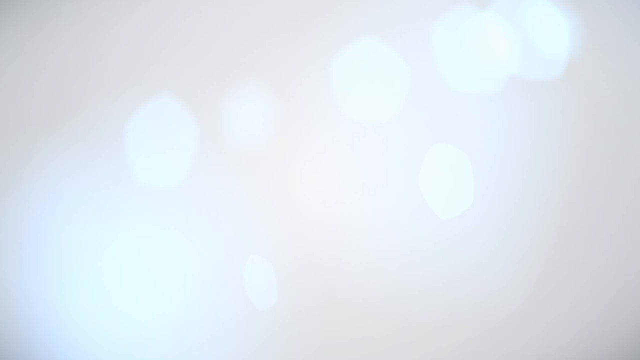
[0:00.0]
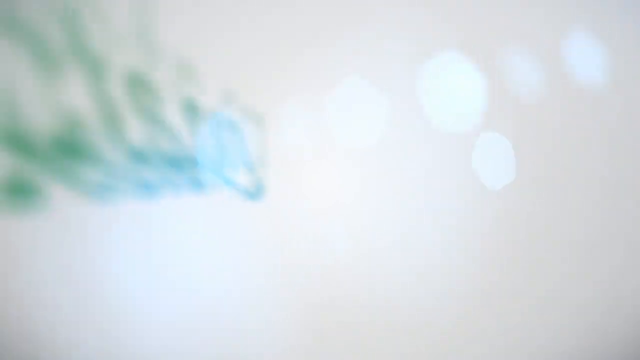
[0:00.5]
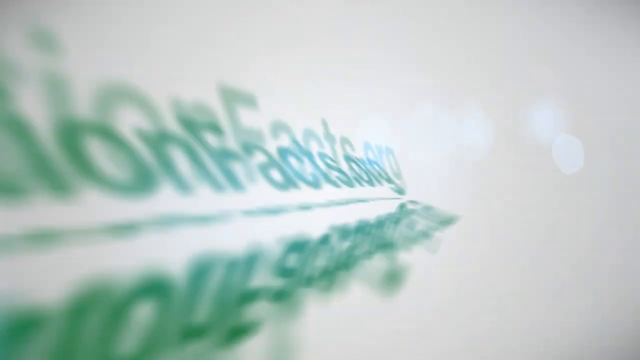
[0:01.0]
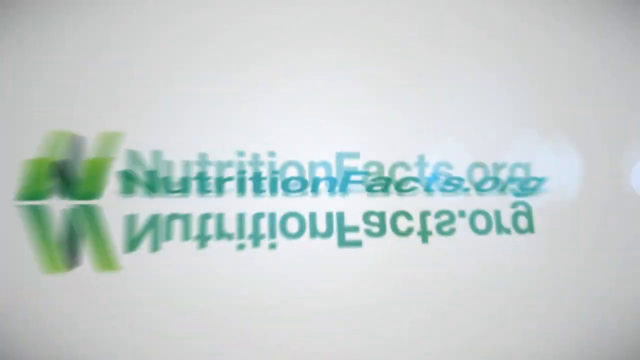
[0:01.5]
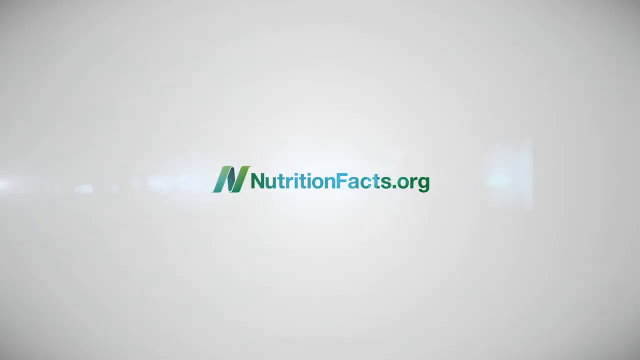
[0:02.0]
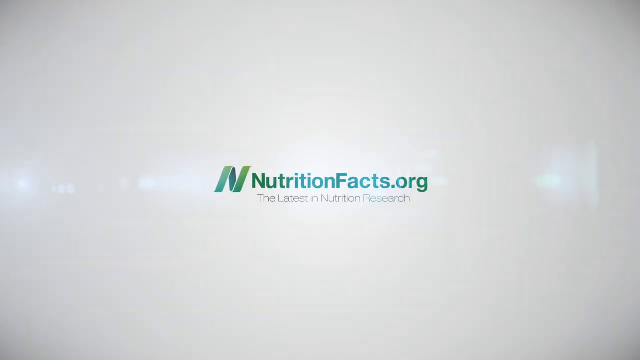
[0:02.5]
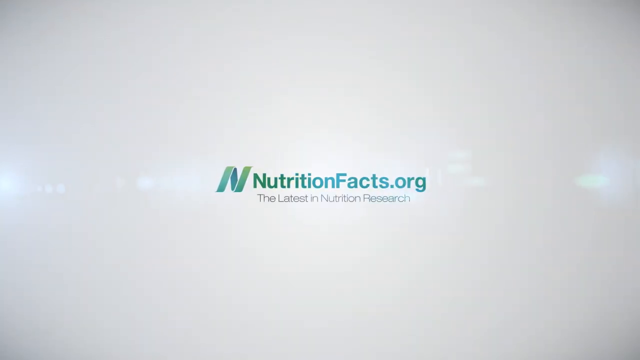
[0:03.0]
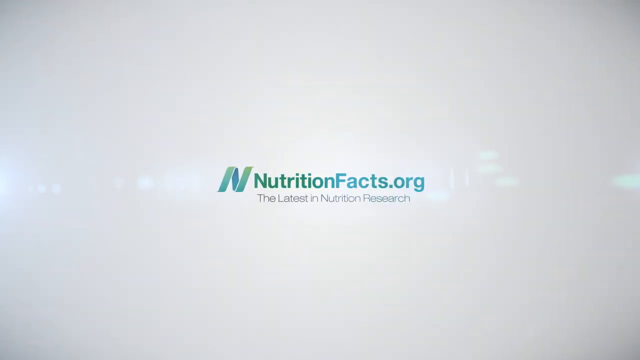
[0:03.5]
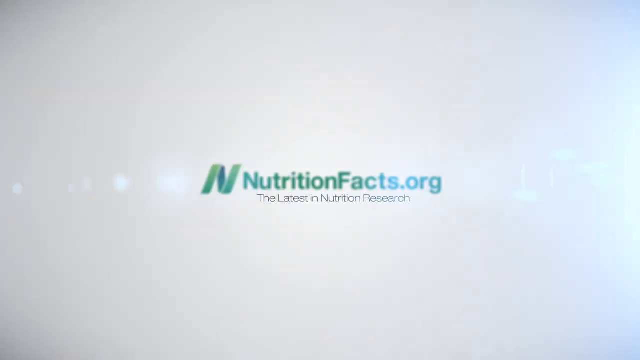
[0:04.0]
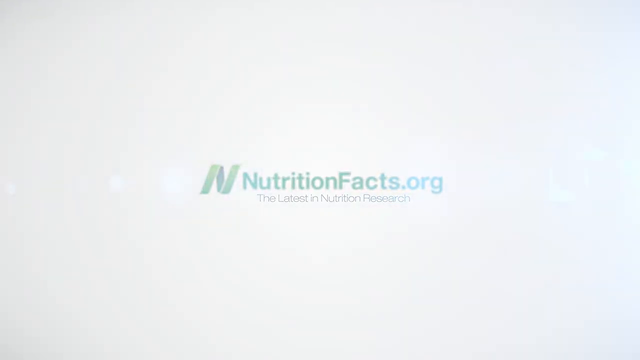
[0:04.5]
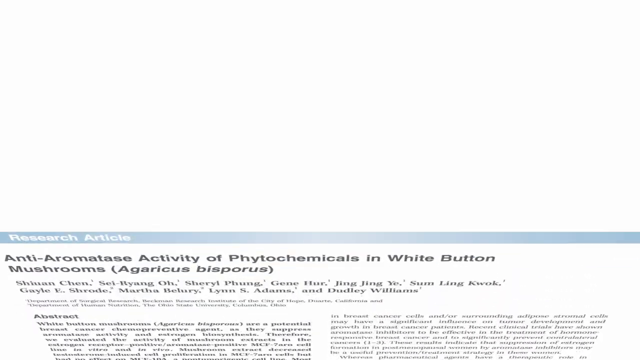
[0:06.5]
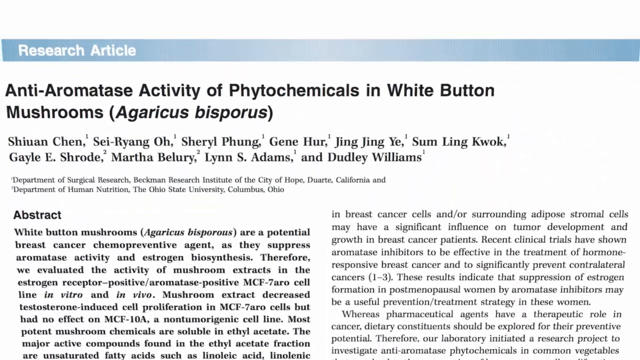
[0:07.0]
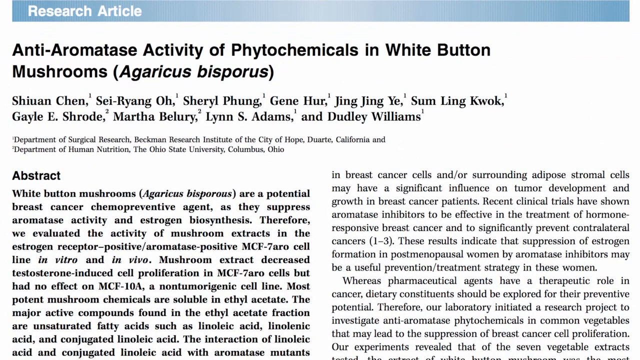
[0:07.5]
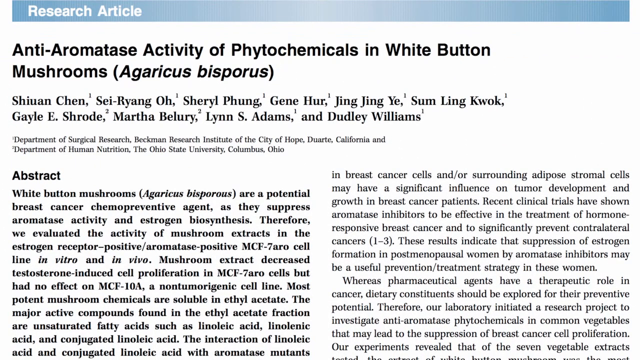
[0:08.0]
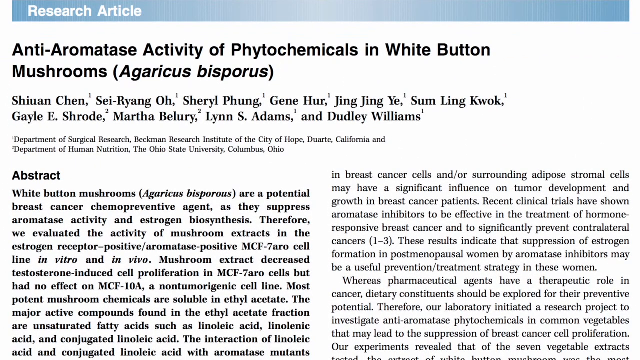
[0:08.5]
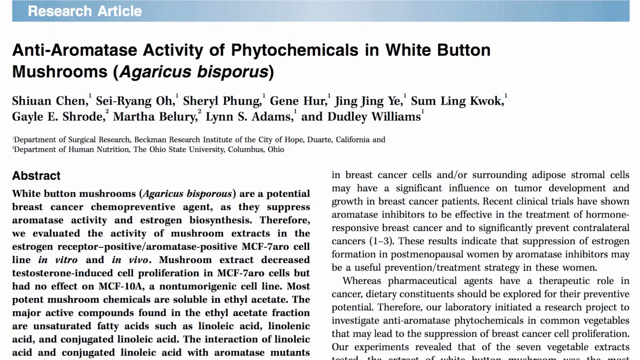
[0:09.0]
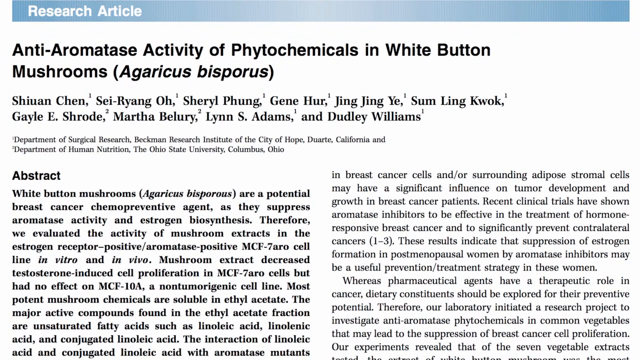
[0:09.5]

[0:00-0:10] The video opens with a text effect displaying a website on an off-white background. The website's name is nutritionfacts.org, and below it is written "the latest in nutrition research." Next, a black white screen appears, and then an article pops up on the screen. It is a research article, as written on the upper left of the screen, and its title reads "anti-aromatase activity of phytochemicals in white button mushrooms." Below the title is a list of the writers' names, and the abstract write-up fills the rest of the page.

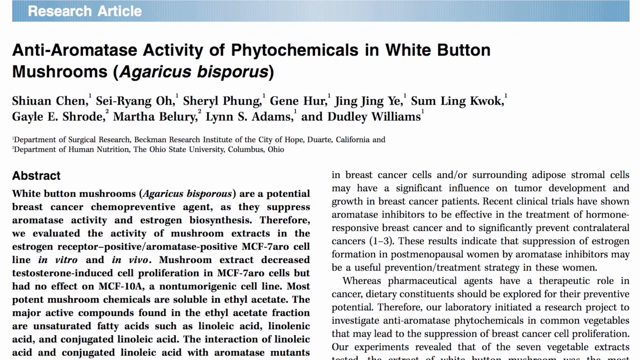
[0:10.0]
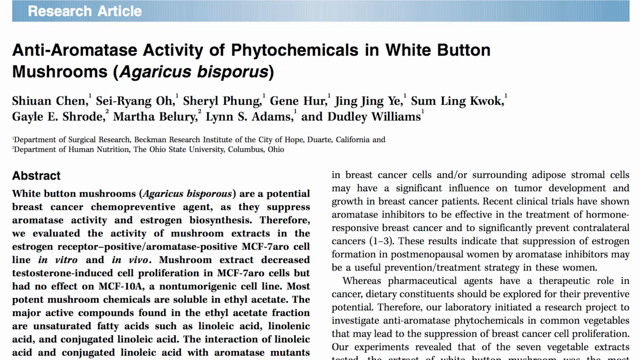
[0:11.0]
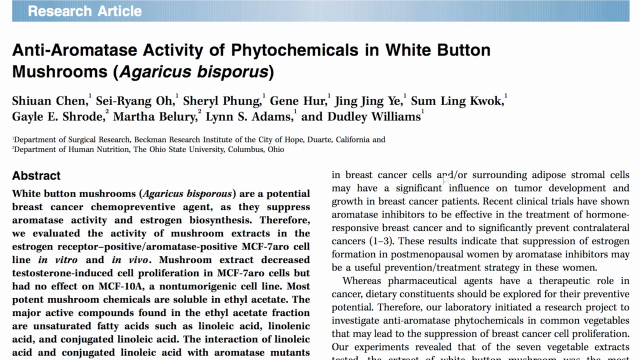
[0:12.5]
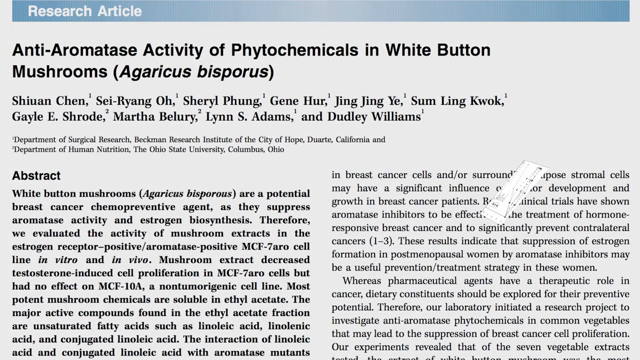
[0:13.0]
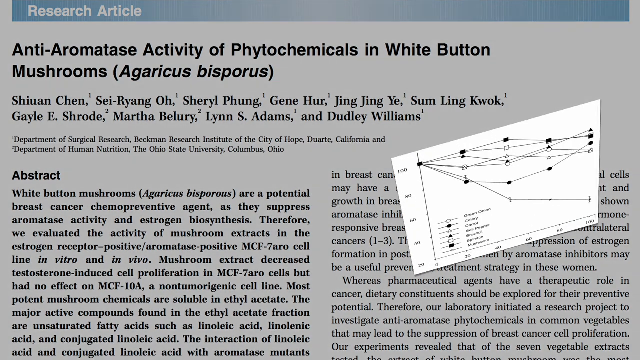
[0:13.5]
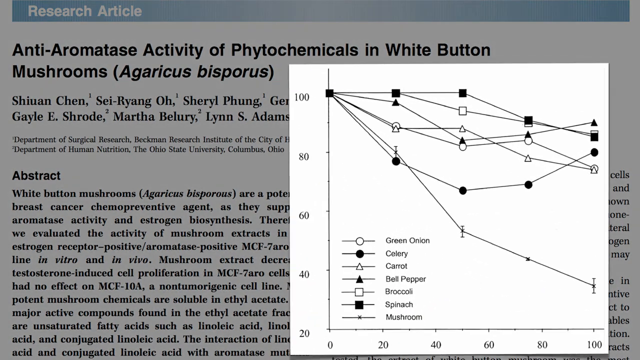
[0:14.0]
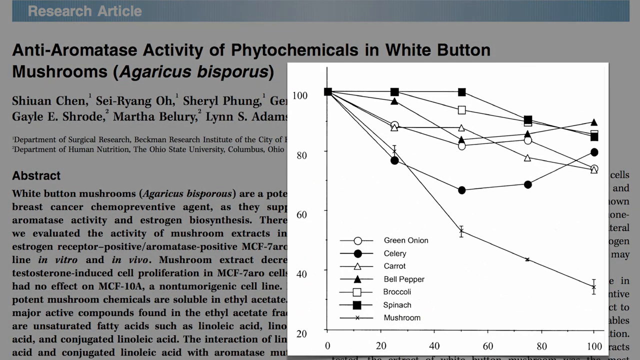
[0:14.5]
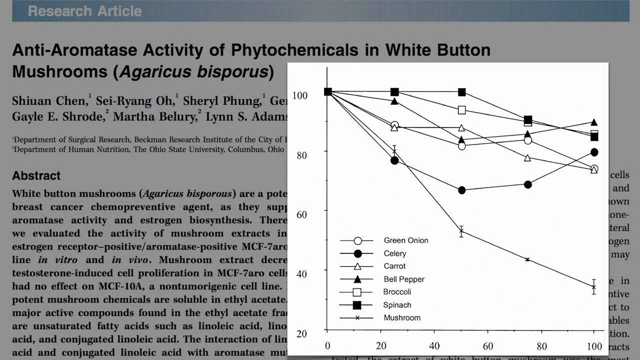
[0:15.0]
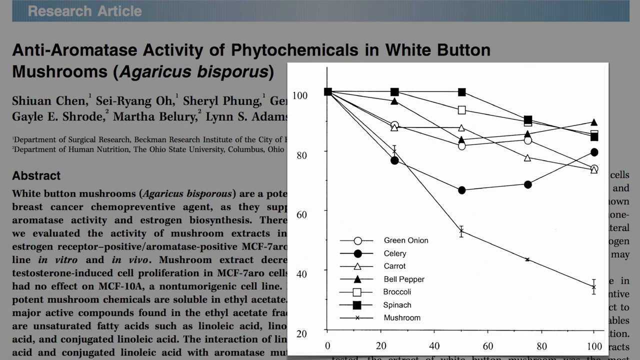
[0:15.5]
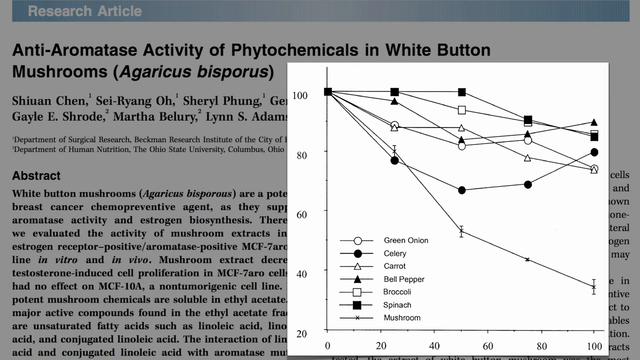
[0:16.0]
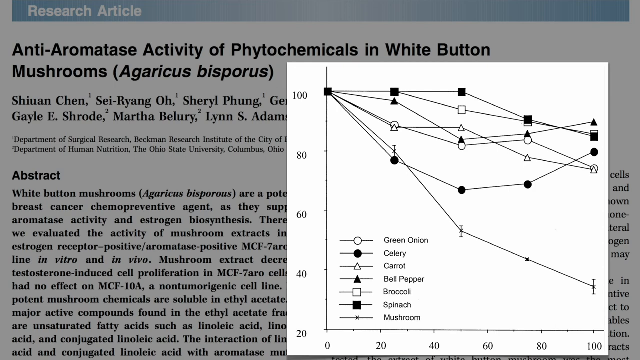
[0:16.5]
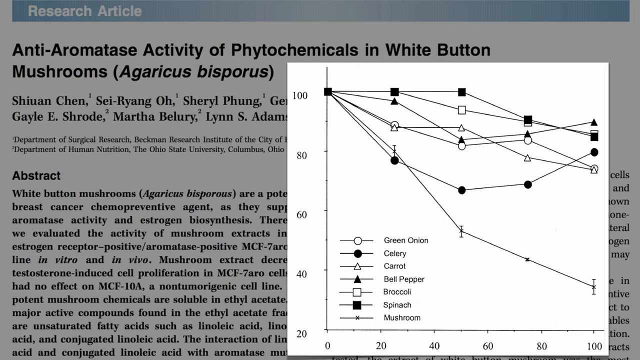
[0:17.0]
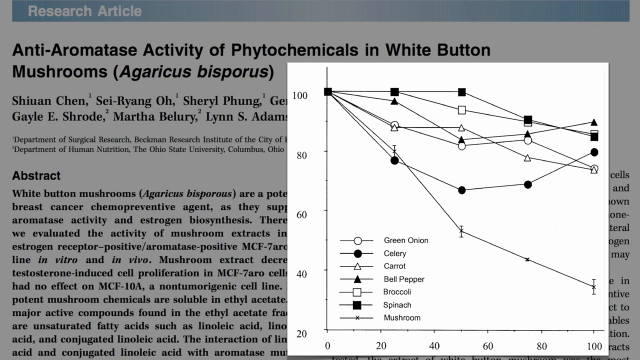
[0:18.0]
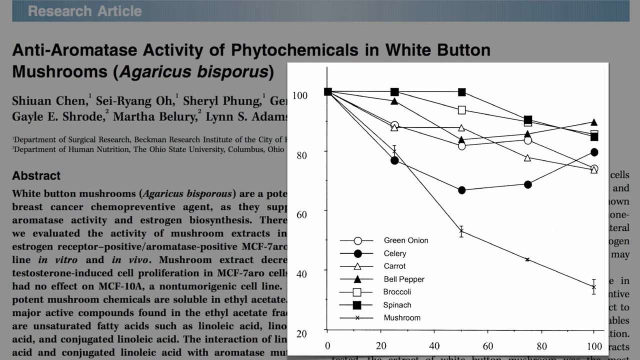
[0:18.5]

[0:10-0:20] An article is on the screen, with "research article" written in white text on a pale blue horizontal bar in the top left corner. The article title reads "anti-aromatase activity of phytochemicals in white button mushrooms." Below the title is a list of the writers' names, and the abstract write-up fills the rest of the page in two columns side by side. Next, a chart pops up. Its vertical axis is numbered 40, 60, 80 and 100. A legend below the chart shows green onion, celery, carrot, bell pepper, broccoli and spinach, each written next to its legend symbol. This stays in view for about four seconds.